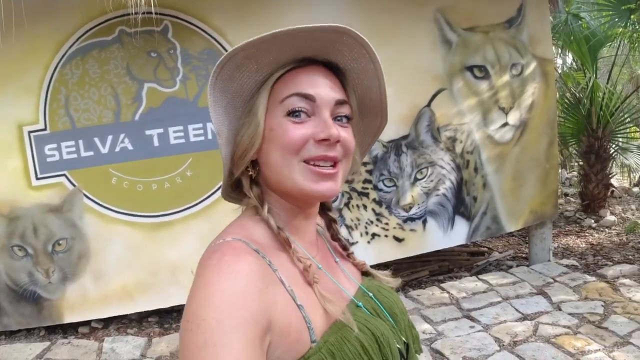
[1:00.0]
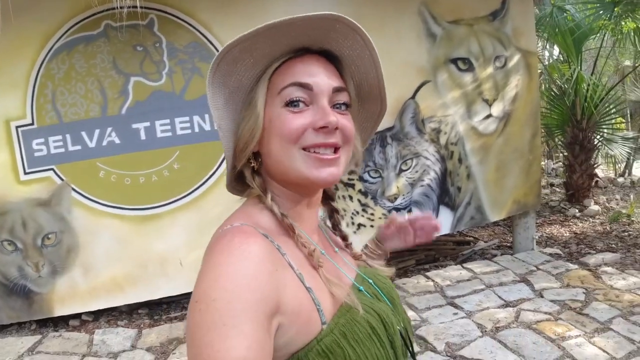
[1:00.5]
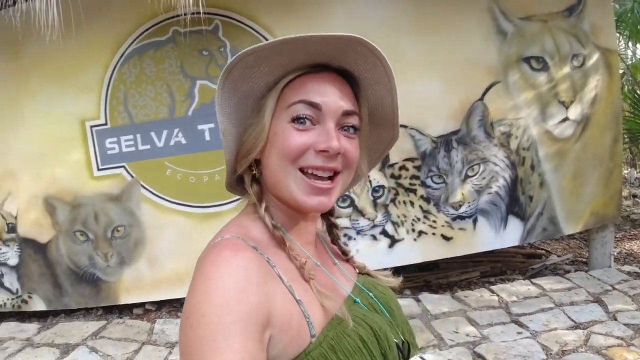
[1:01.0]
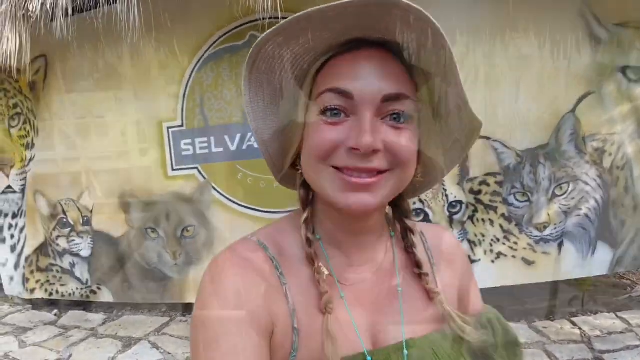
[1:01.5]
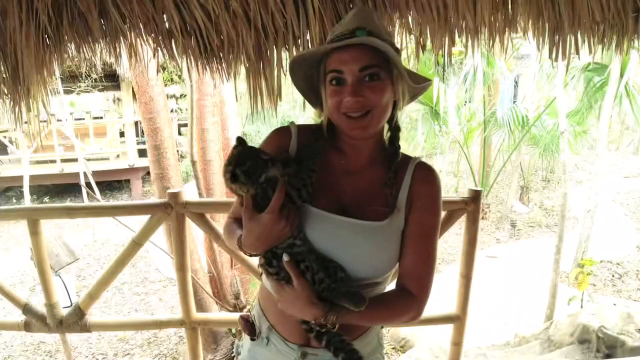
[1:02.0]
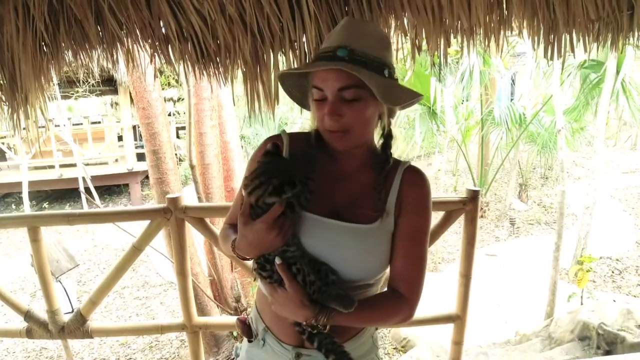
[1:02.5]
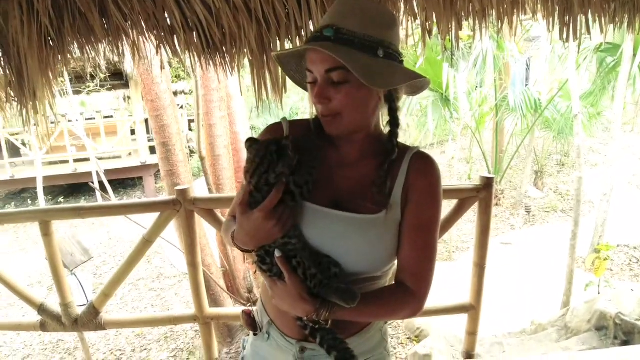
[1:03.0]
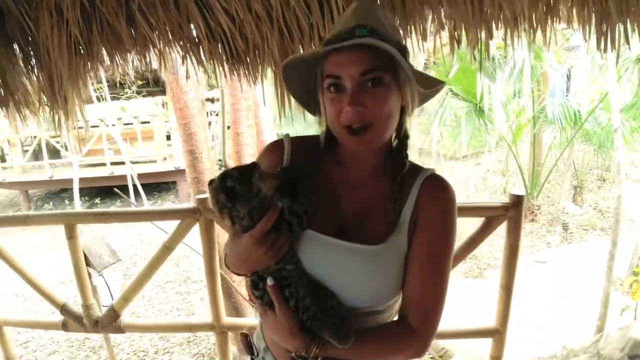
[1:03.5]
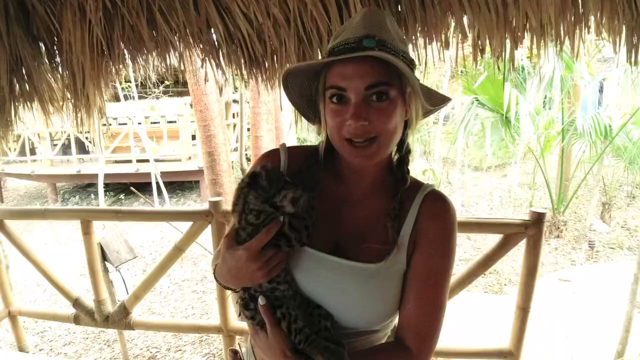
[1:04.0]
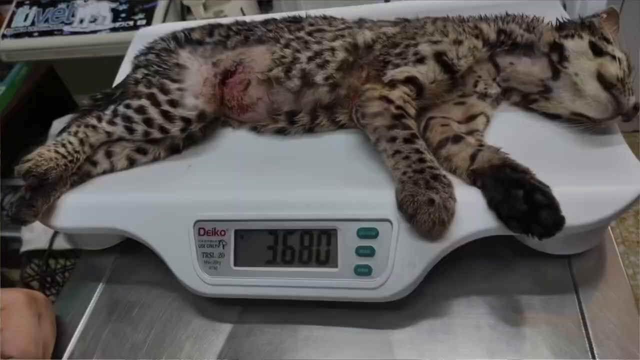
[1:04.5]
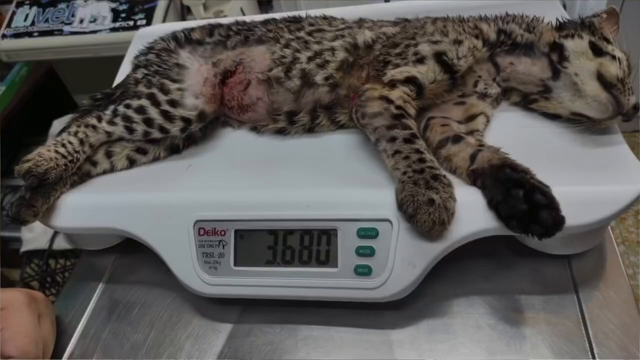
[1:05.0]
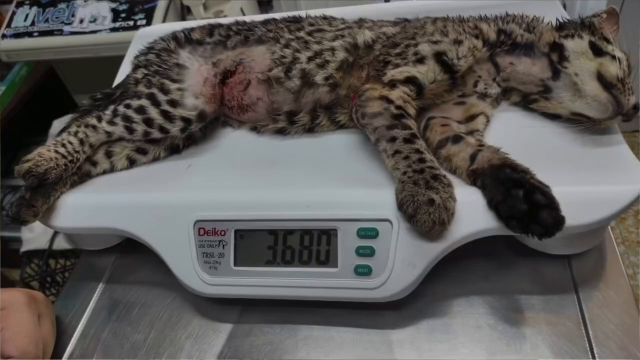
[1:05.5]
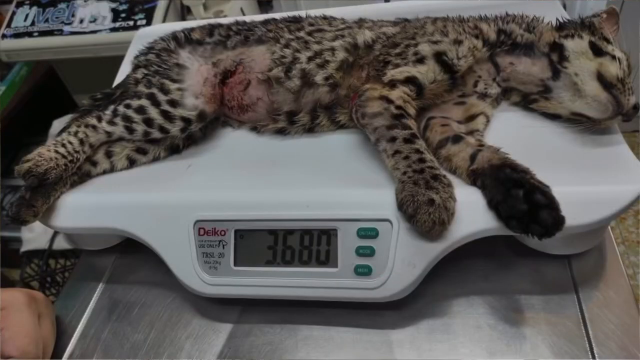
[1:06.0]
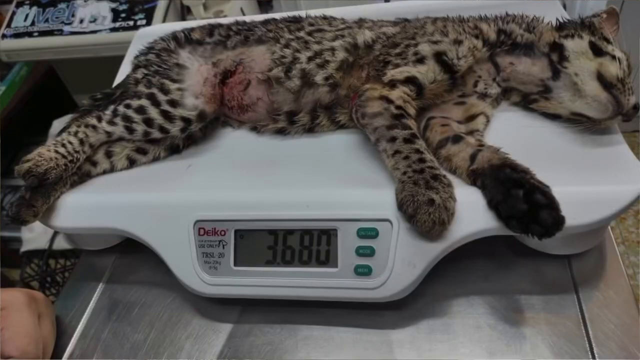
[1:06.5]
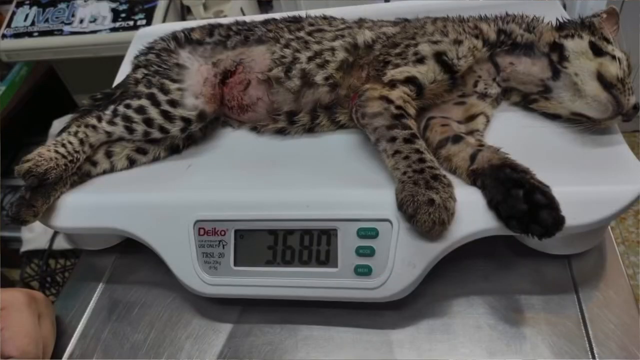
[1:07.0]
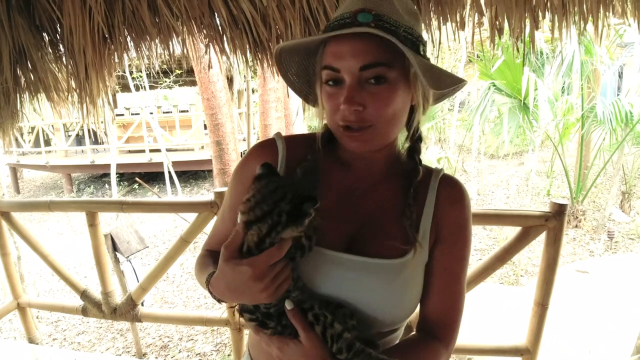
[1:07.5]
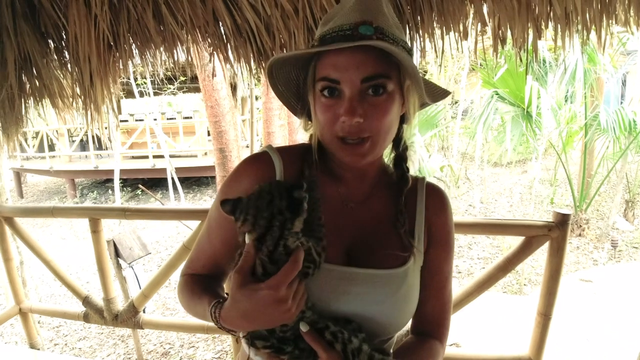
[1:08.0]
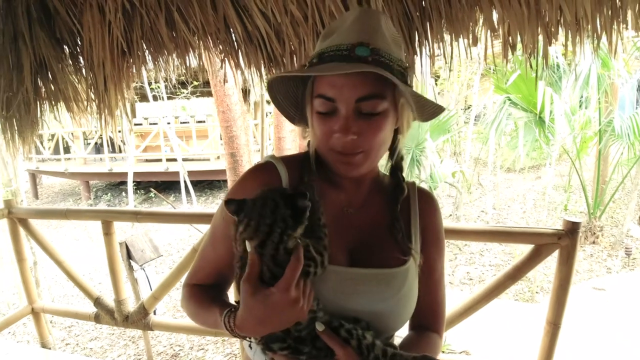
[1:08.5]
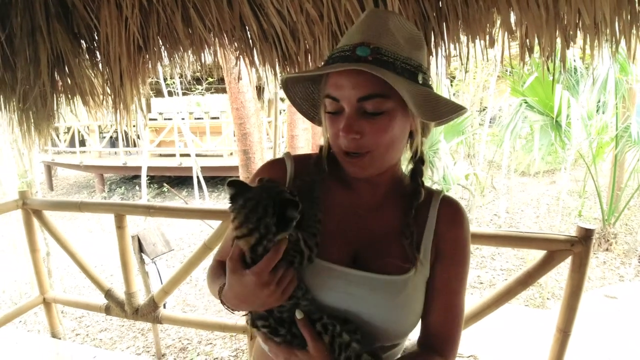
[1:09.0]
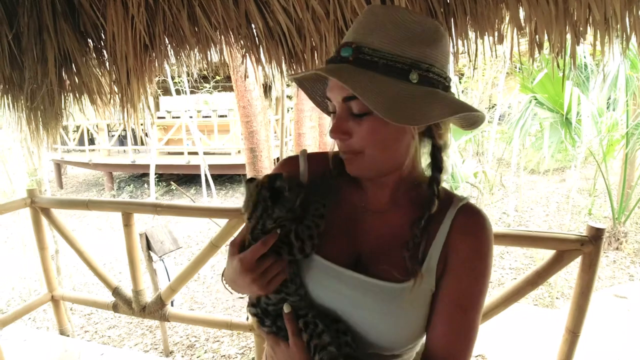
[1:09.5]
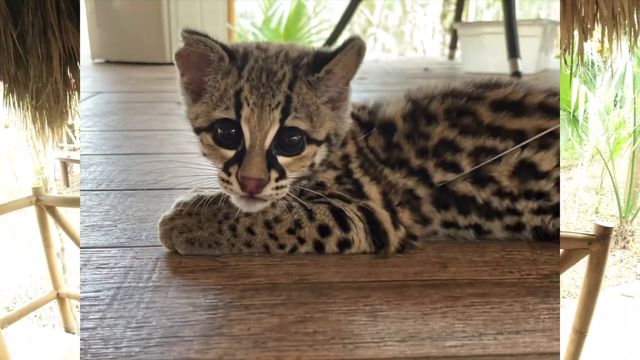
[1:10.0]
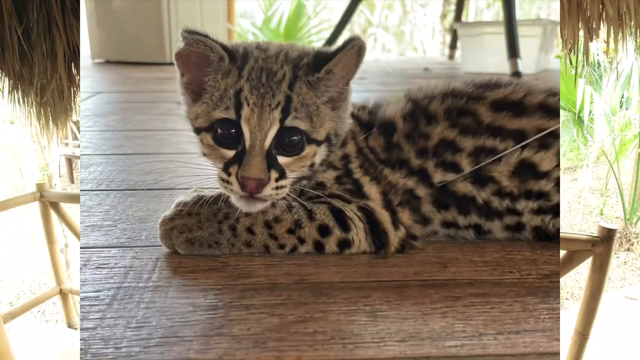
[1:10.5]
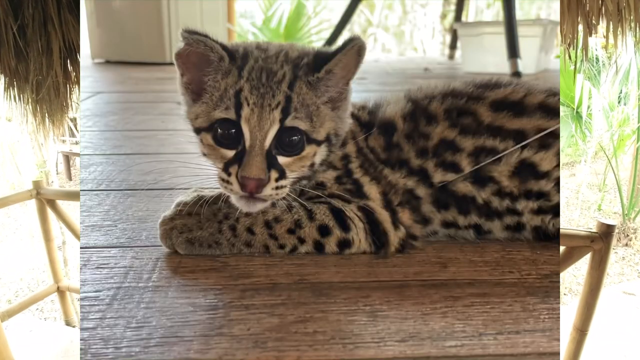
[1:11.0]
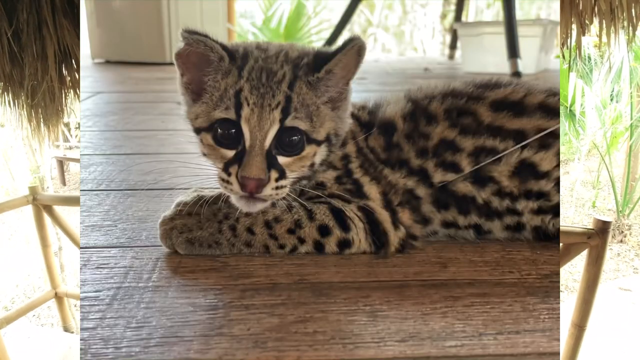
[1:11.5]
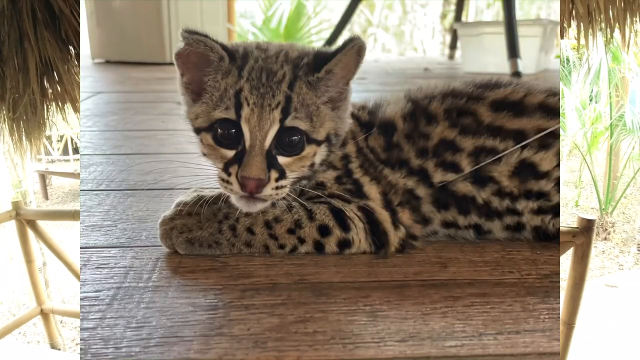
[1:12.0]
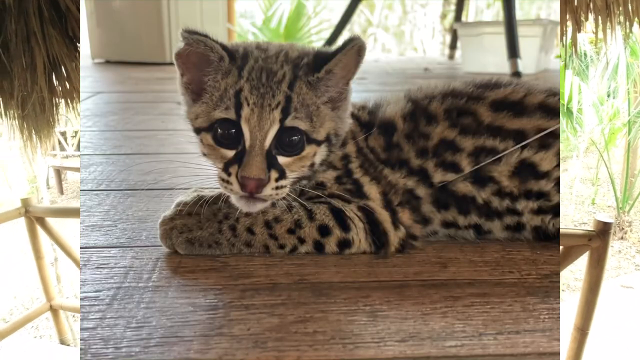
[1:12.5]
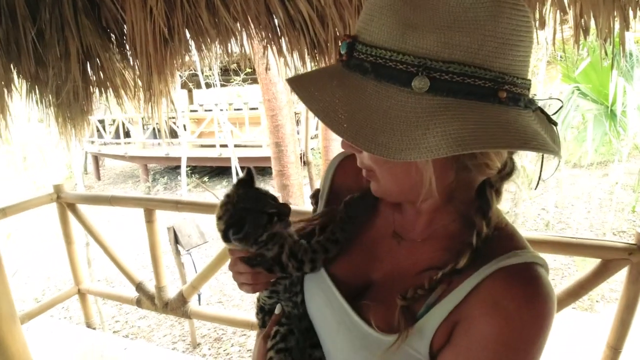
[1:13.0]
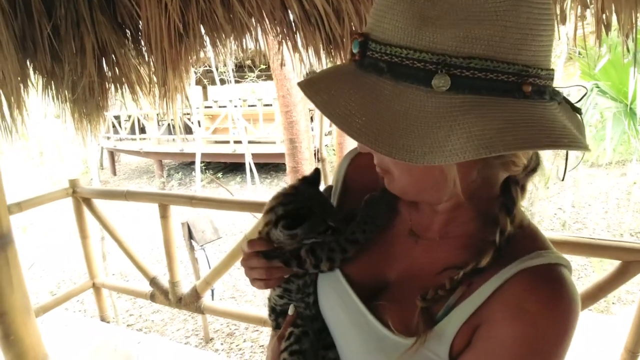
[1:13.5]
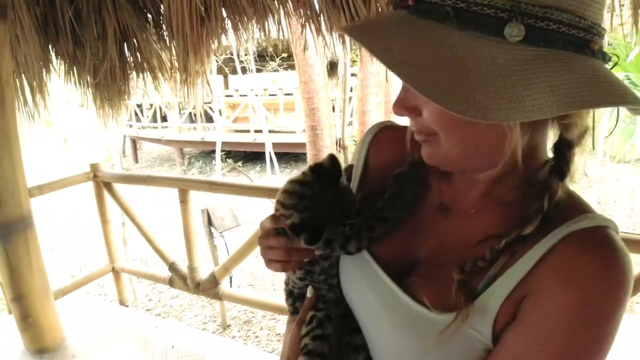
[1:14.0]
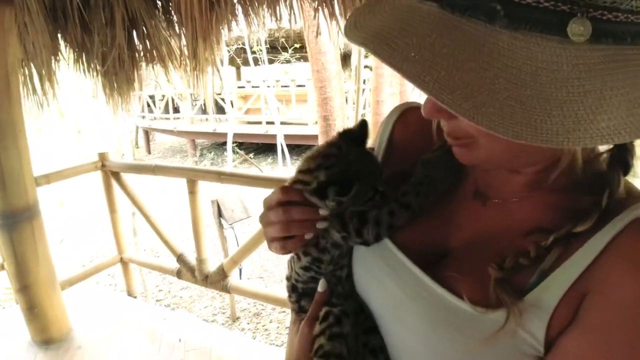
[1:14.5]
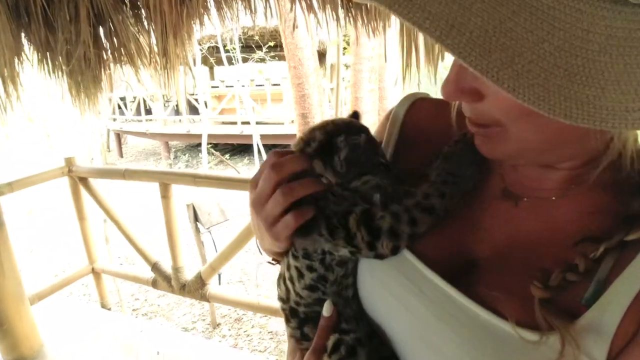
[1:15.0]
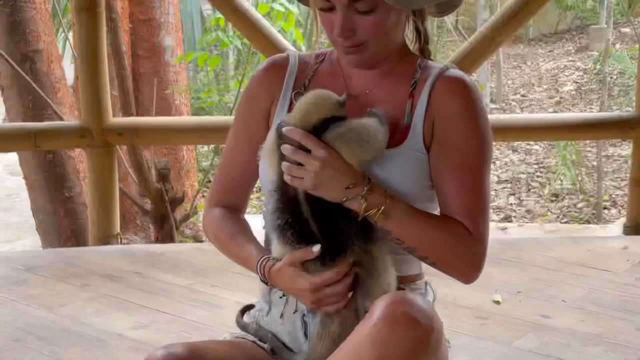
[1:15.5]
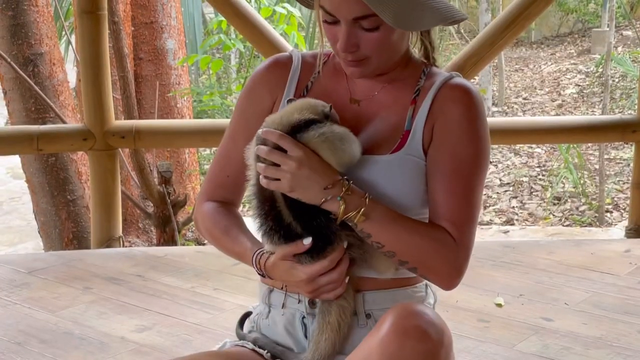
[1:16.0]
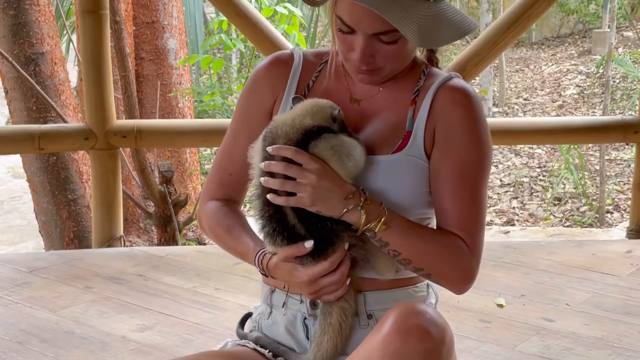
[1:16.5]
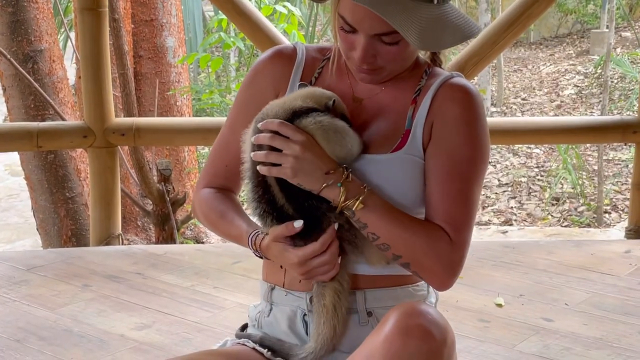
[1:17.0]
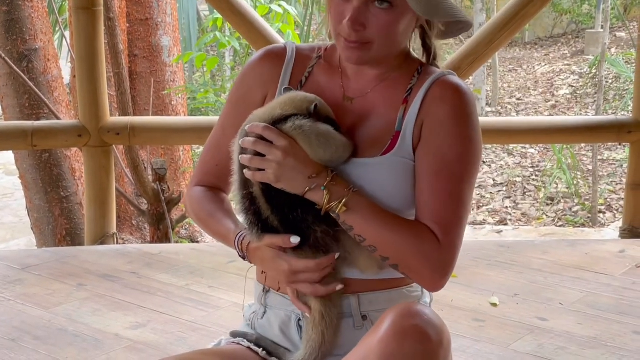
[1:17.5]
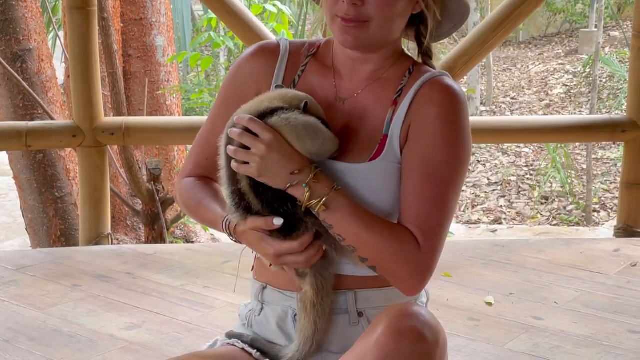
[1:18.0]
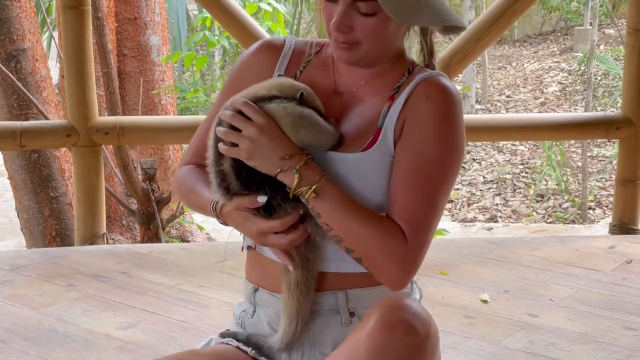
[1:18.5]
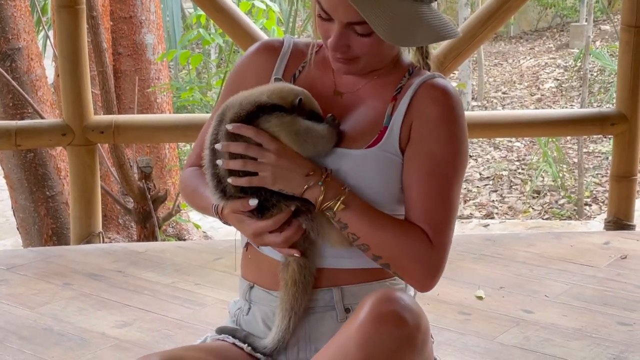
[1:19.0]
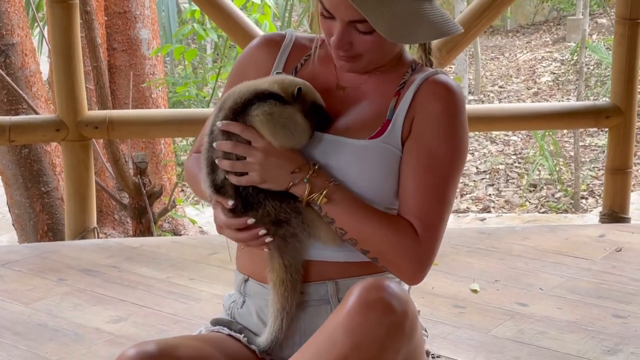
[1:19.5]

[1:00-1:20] A woman talks in front of the camera, with a wall behind her that has artwork of cats drawn on it. The camera moves, showing that she is the one holding it. Next, she holds a kitten in her hands, and it makes some movements. Then a little kitten that looks dead and injured is put on a scale, and its weight is shown on the scale. She also holds another tiny animal in her arms as it scratches and bites her hands.